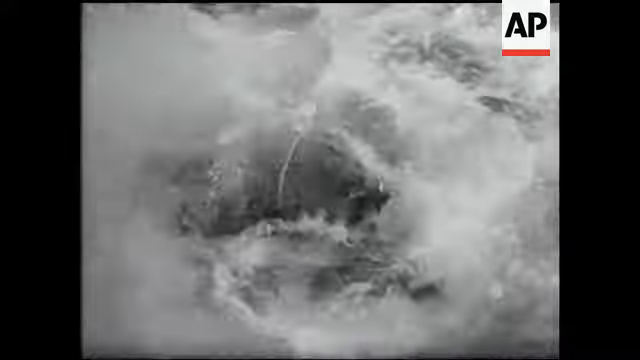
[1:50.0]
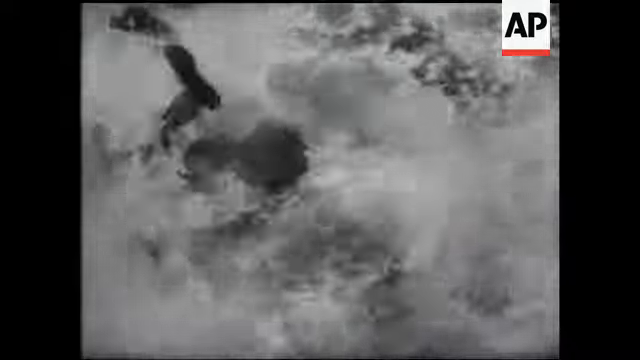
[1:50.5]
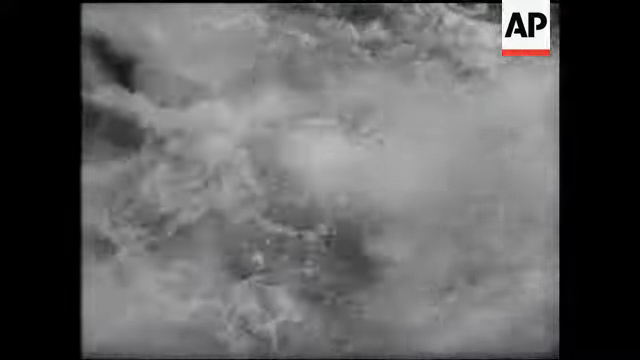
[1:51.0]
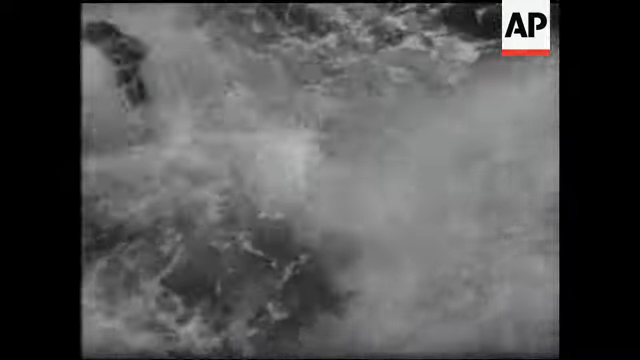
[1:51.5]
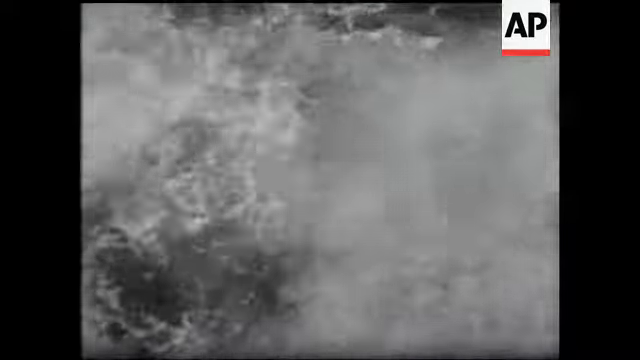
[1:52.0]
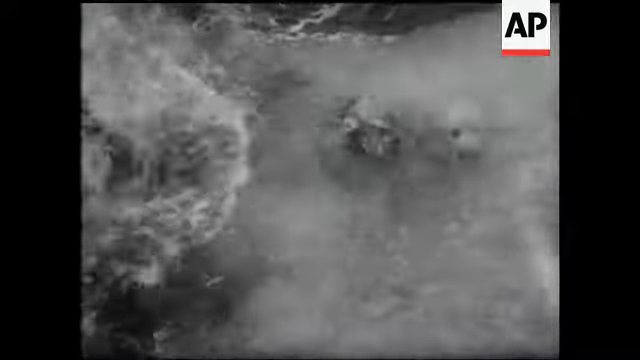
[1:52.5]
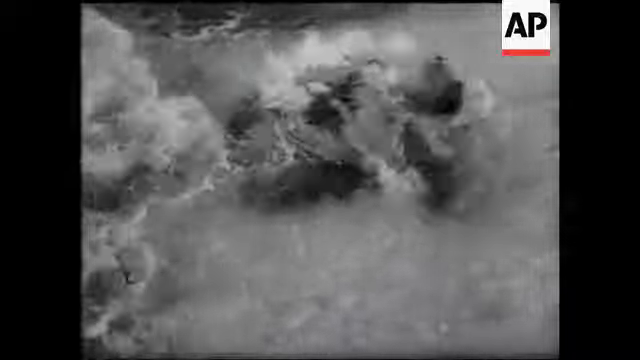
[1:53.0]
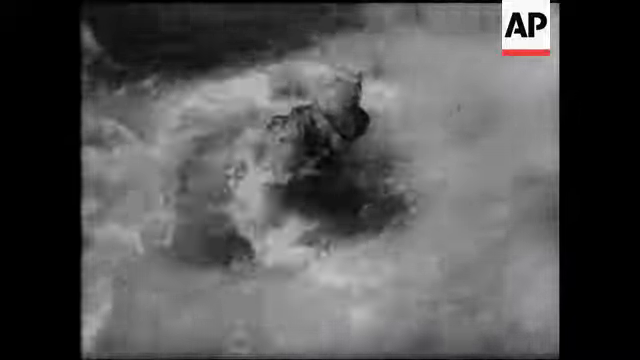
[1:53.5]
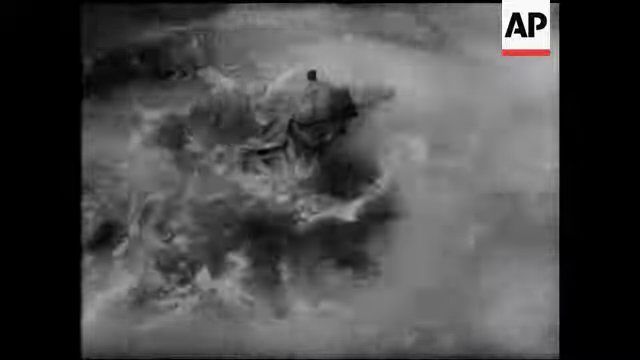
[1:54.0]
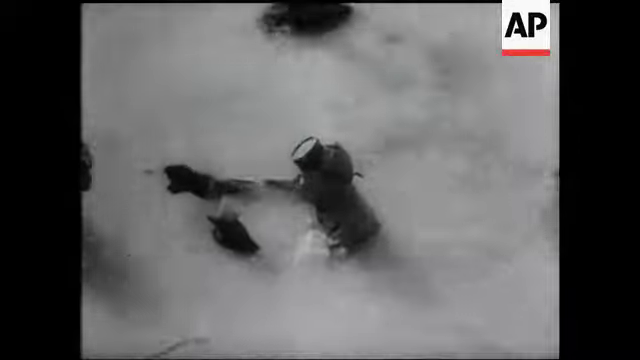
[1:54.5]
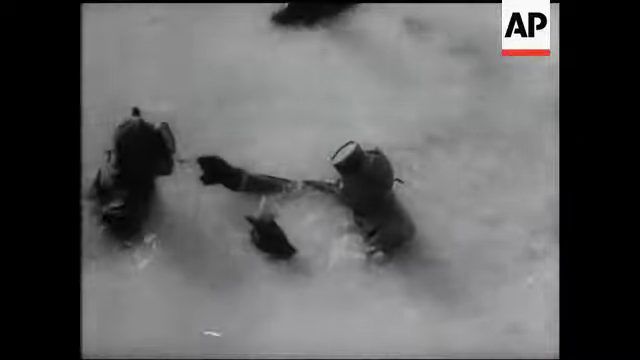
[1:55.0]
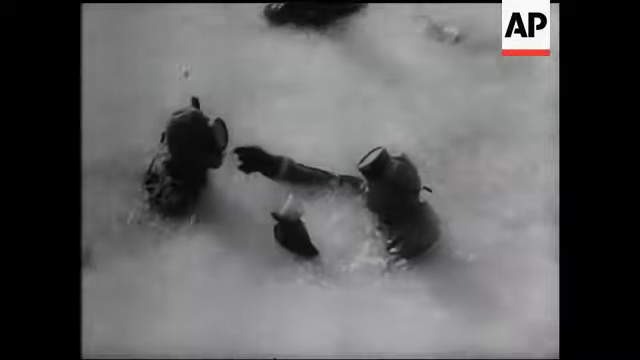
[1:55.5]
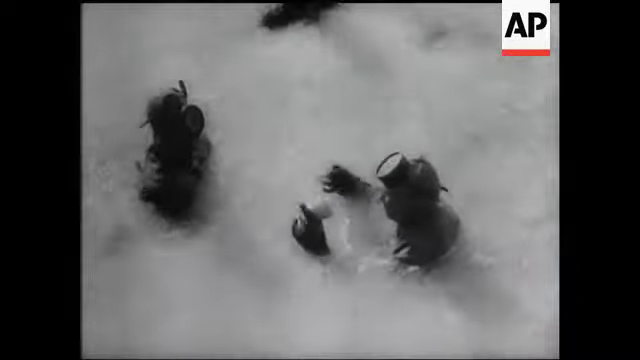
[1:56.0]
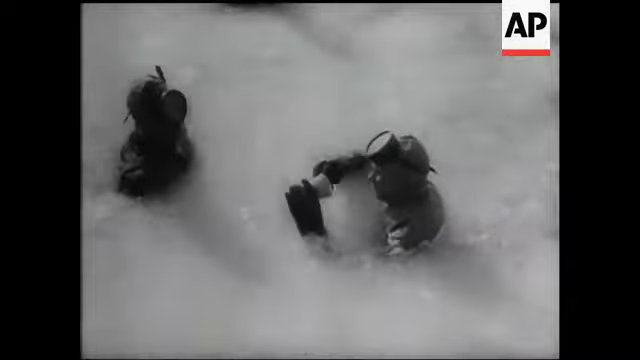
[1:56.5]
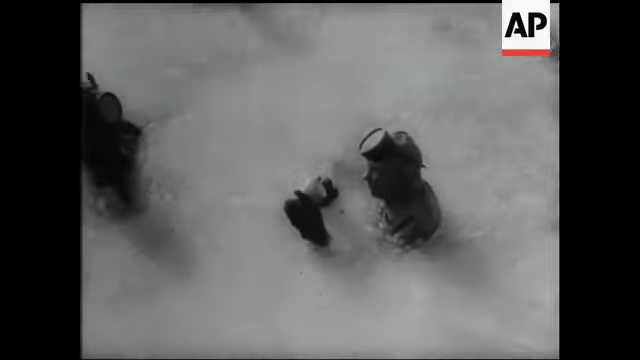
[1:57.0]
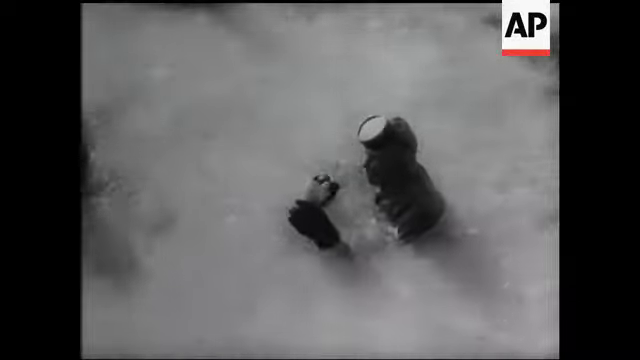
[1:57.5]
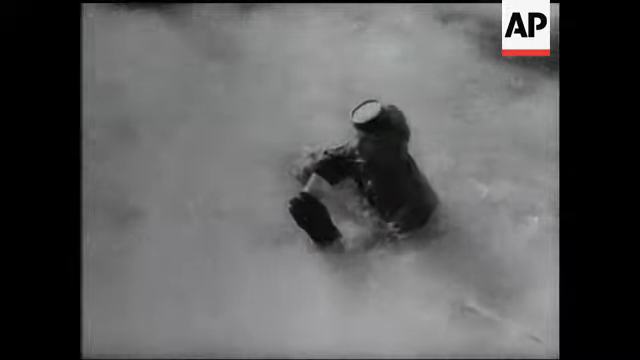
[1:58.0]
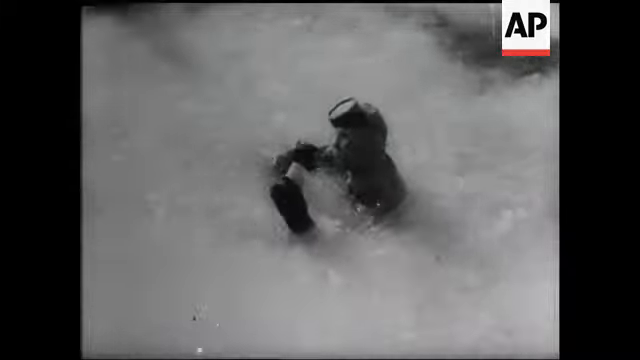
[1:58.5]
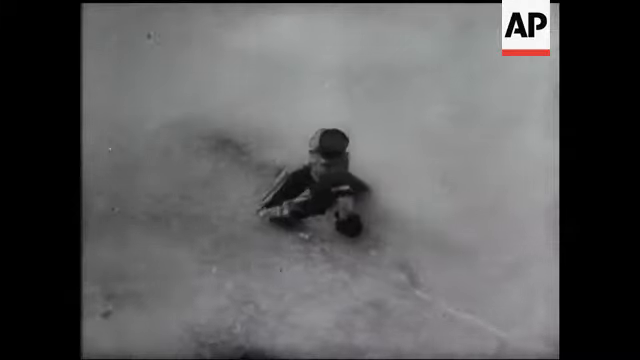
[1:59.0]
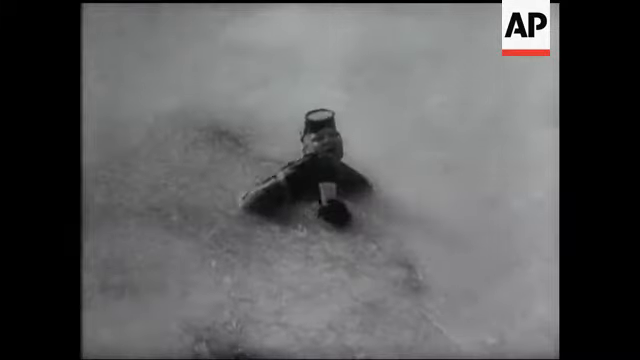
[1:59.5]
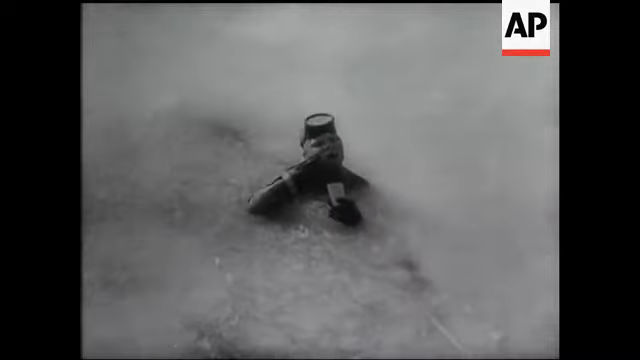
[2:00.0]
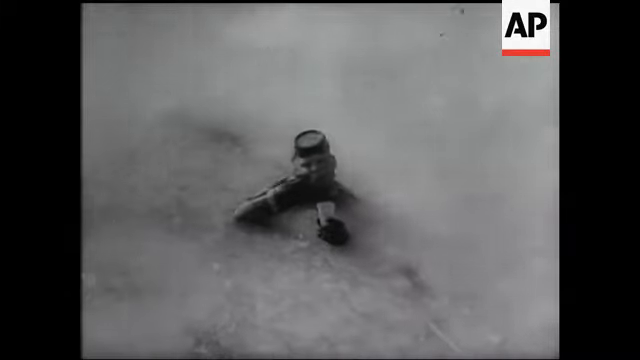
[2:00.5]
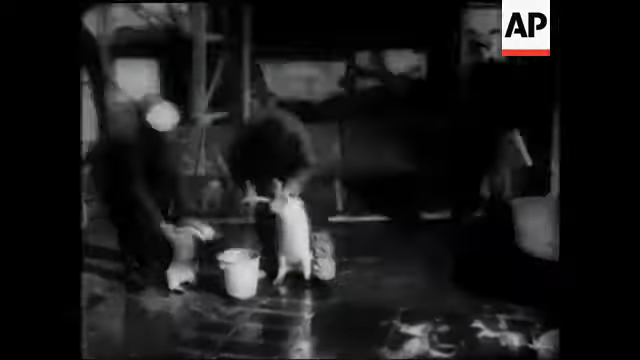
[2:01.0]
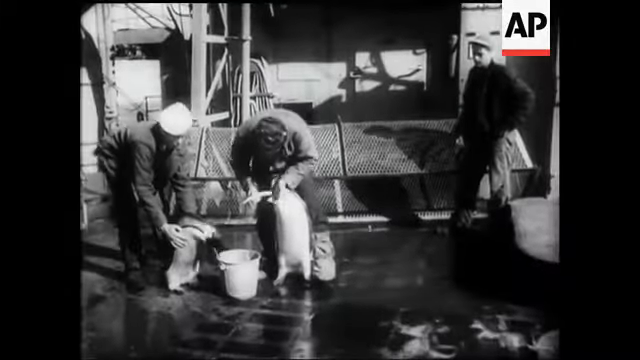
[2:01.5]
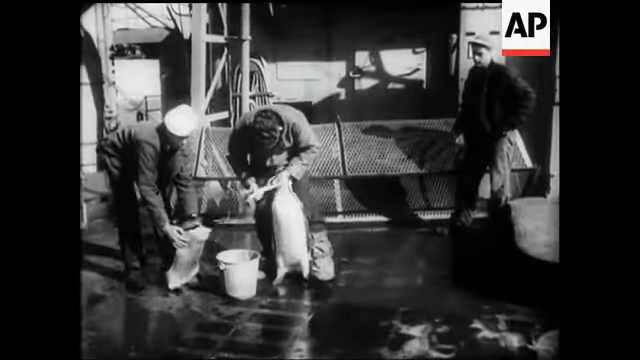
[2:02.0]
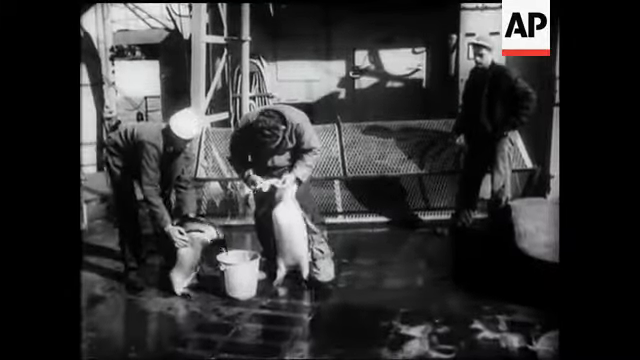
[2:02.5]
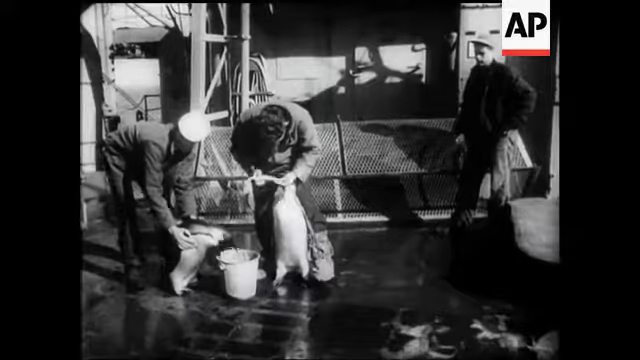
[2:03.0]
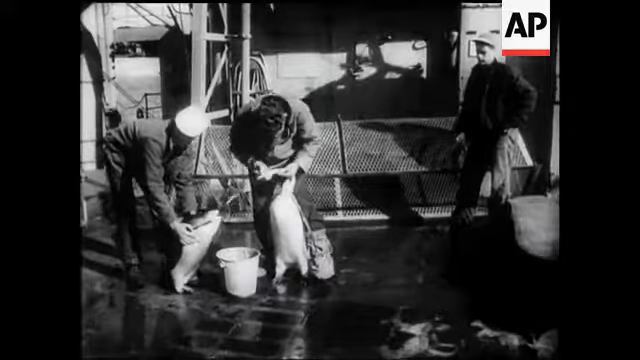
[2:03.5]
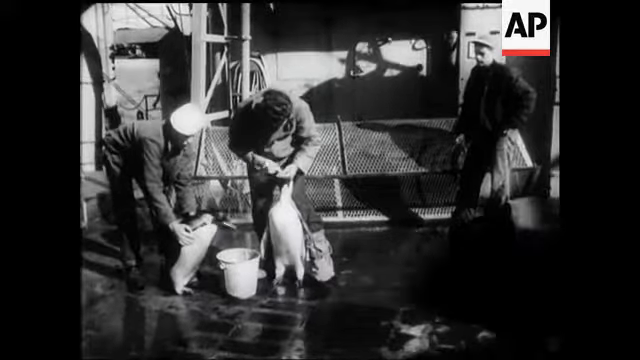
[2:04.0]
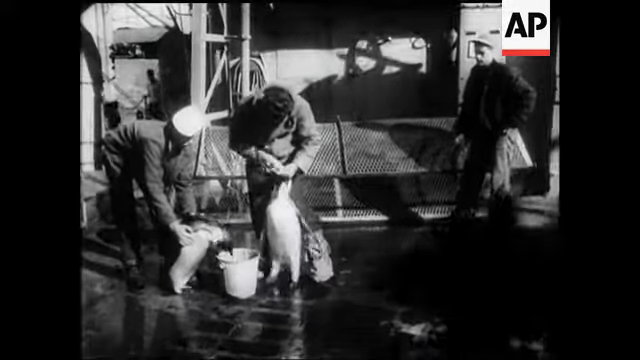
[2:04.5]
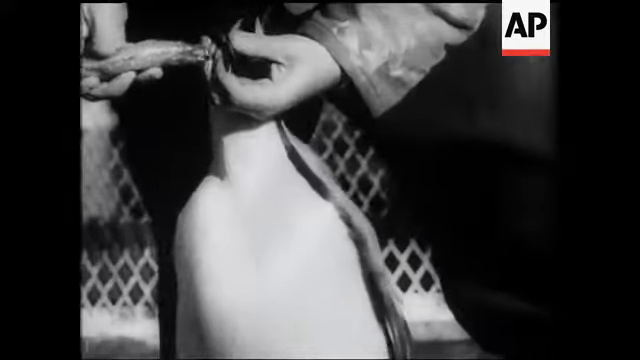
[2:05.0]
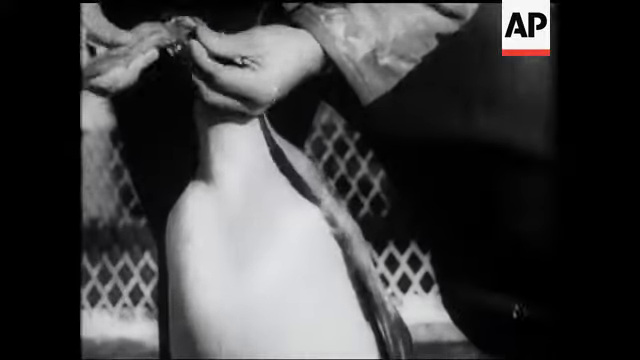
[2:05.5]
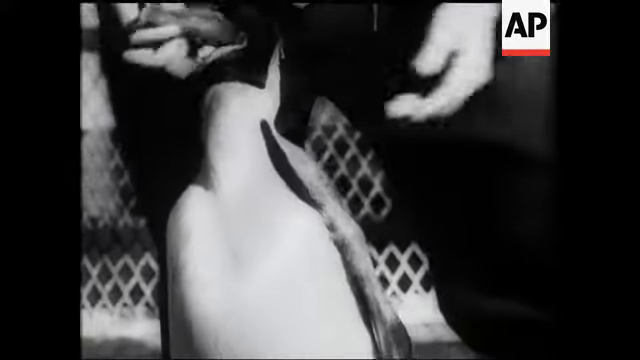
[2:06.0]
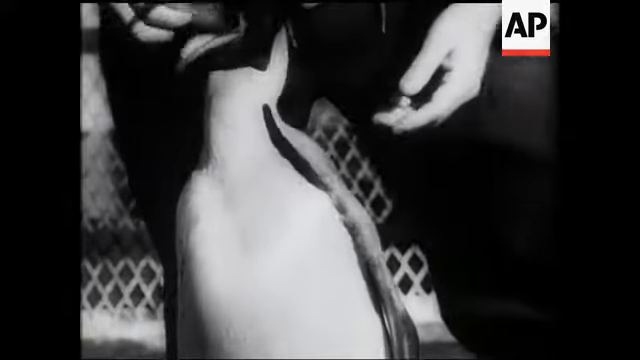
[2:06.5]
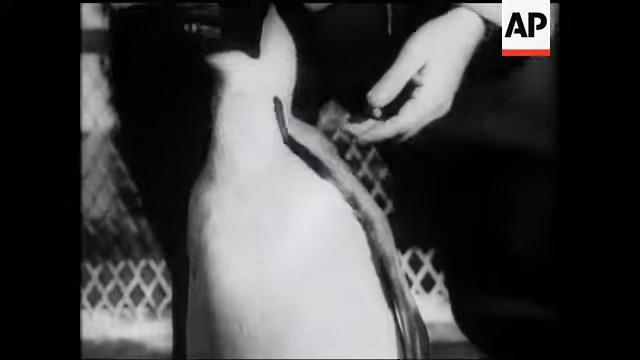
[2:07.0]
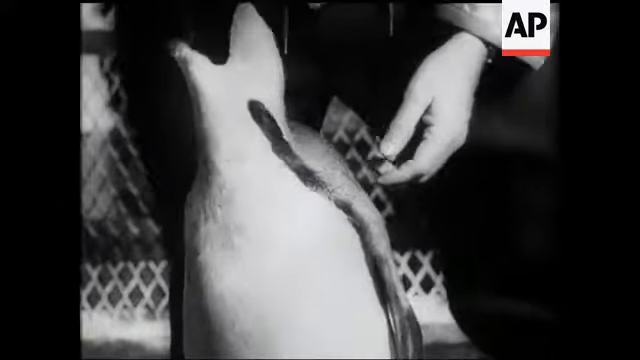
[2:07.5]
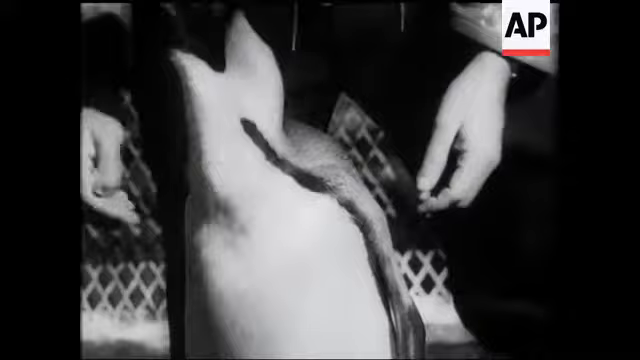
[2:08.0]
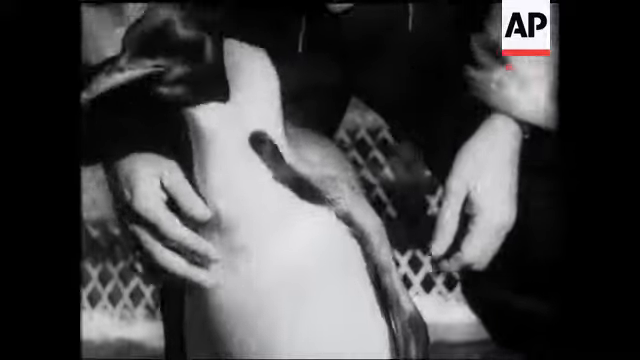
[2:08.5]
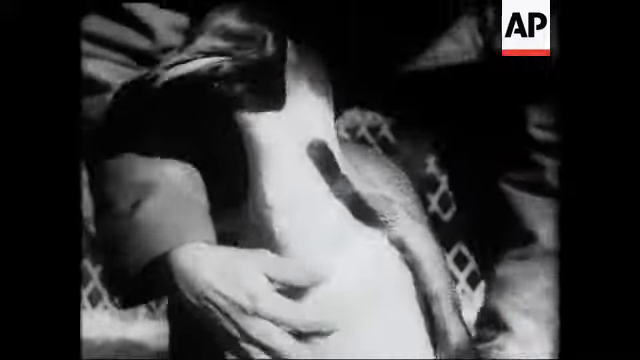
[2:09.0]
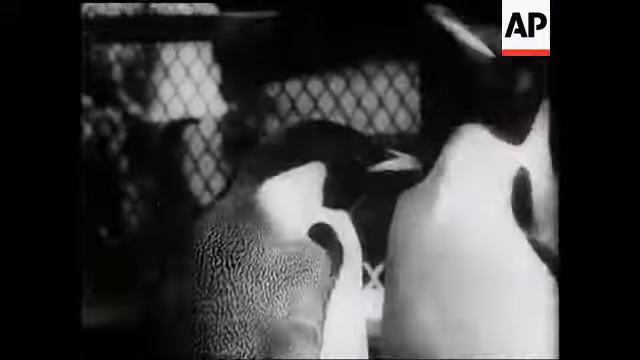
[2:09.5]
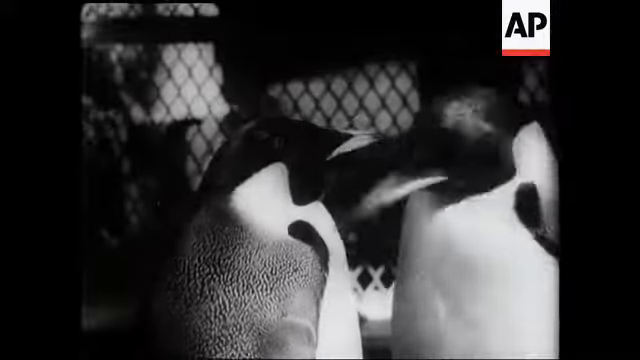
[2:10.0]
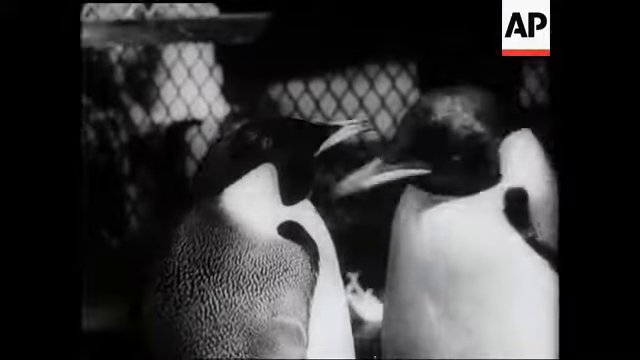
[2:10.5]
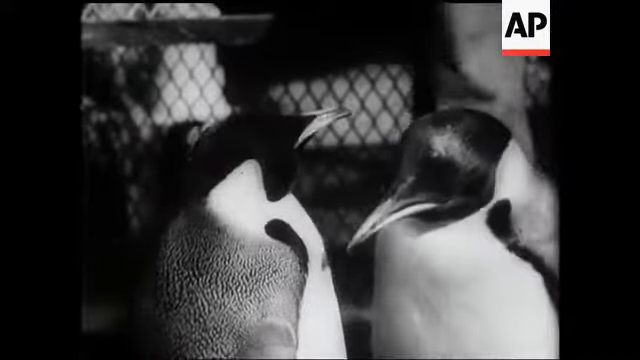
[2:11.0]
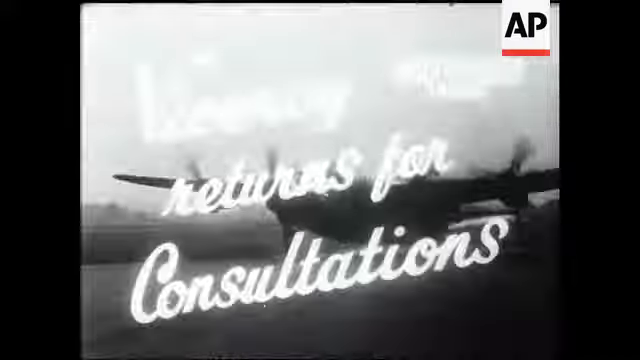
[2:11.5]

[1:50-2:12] The divers are on the surface of the icy ocean with their face masks pulled up. They have been passed some kind of food or drink, possibly soup, in a sort of plastic cup with a spoon, and both consume it. The scene then cuts to the deck of a ship, where a group of sailors examine a couple of penguins. One sailor holds a penguin by the neck and tries to force its mouth open to look down its throat, while another sailor holds a penguin by the wings next to the edge of a bucket. A close-up shows the two sailors giving fish to the penguins, which have been caught.